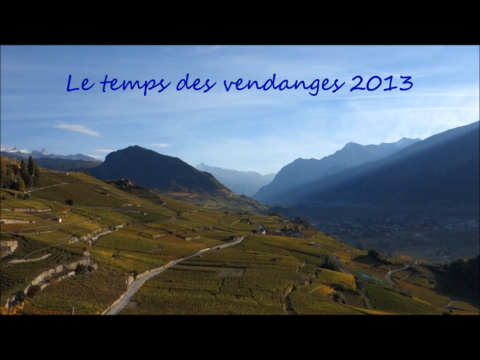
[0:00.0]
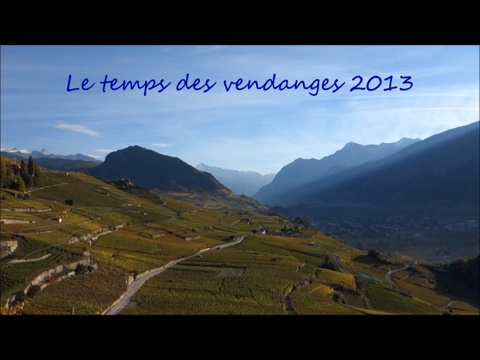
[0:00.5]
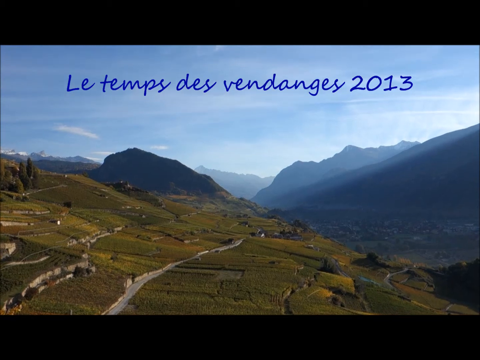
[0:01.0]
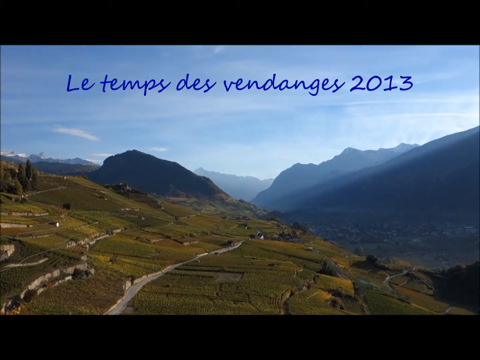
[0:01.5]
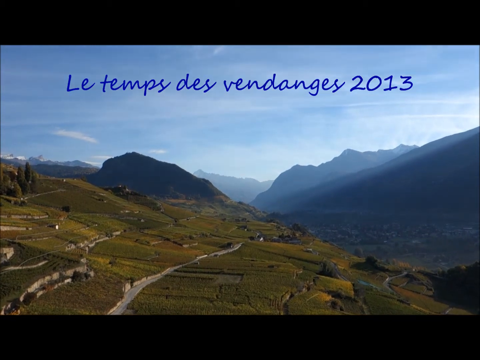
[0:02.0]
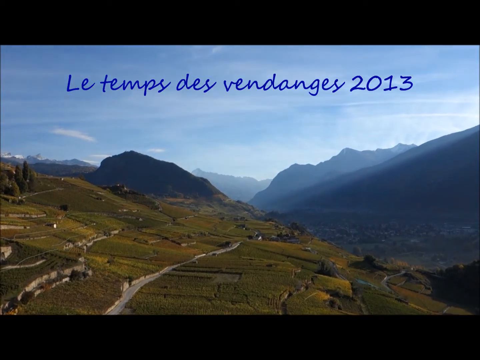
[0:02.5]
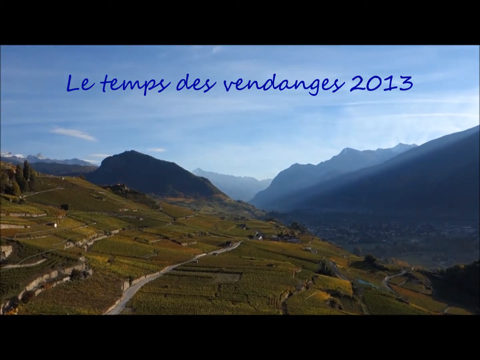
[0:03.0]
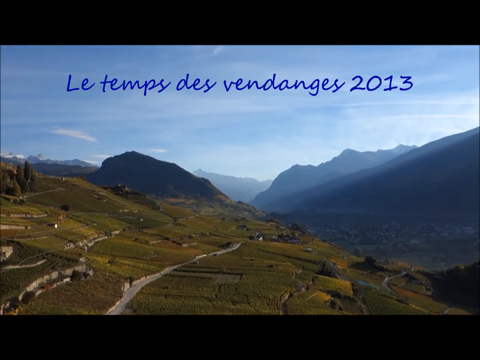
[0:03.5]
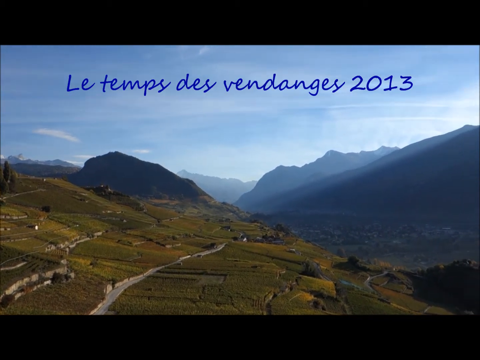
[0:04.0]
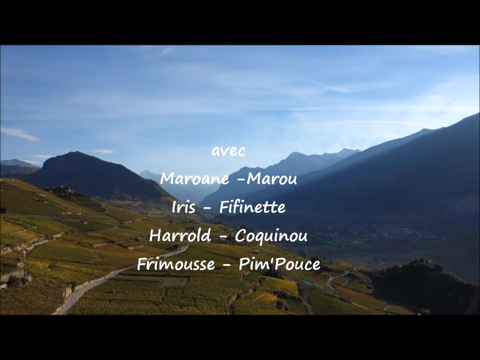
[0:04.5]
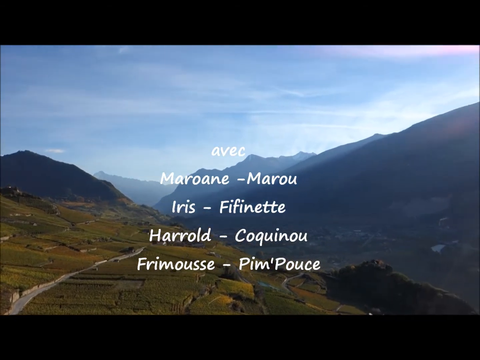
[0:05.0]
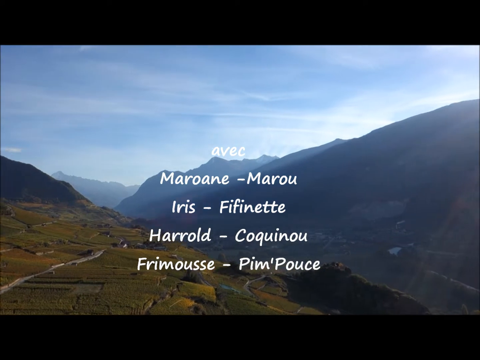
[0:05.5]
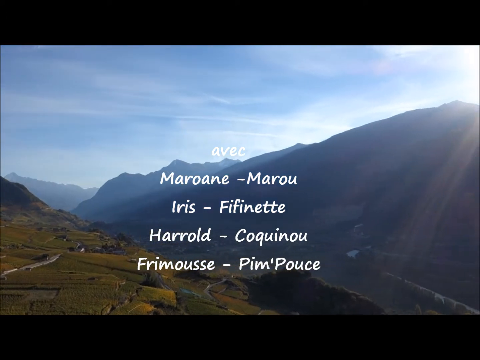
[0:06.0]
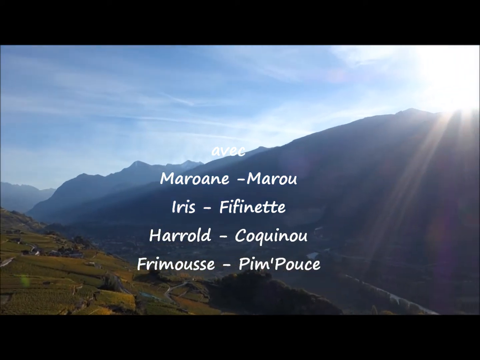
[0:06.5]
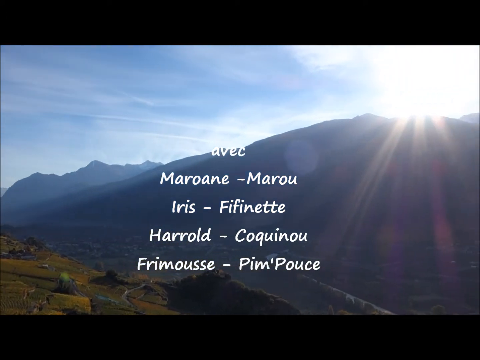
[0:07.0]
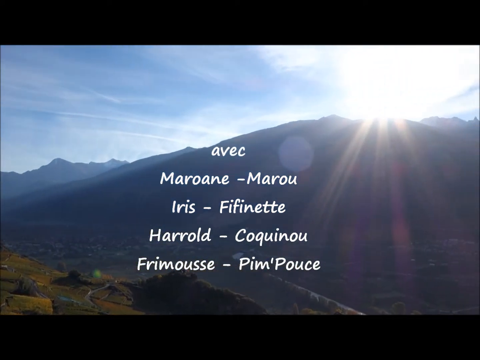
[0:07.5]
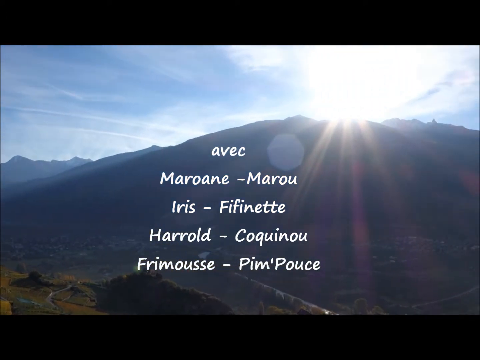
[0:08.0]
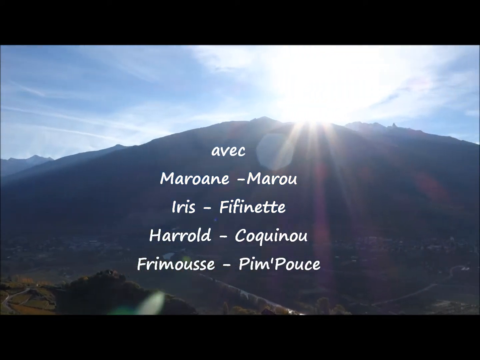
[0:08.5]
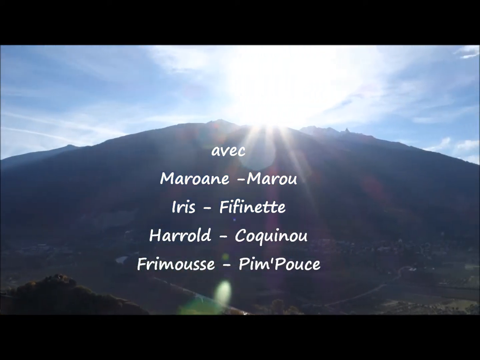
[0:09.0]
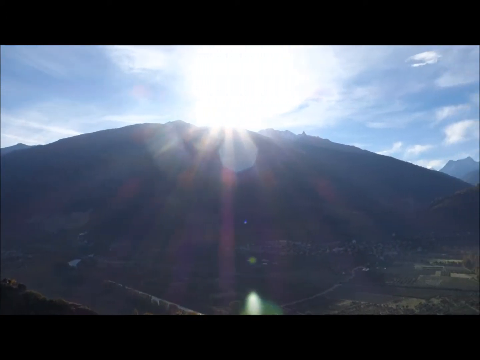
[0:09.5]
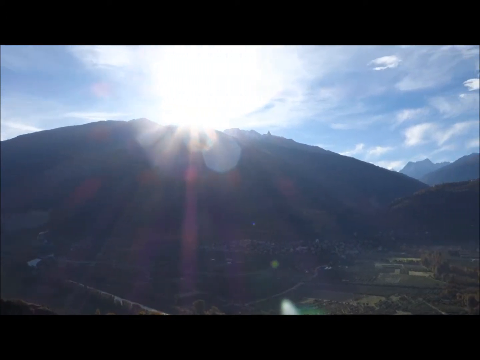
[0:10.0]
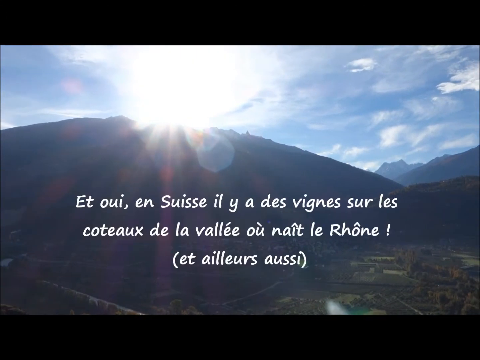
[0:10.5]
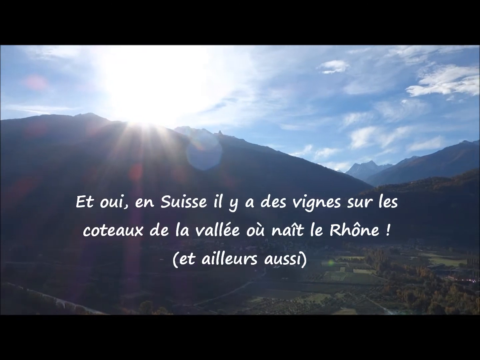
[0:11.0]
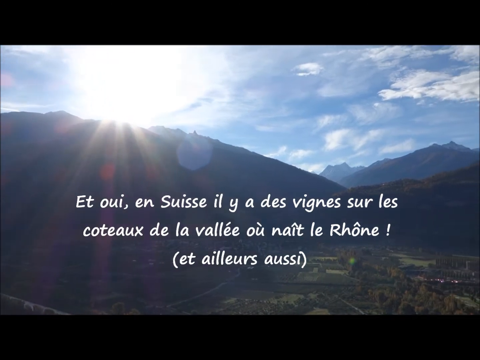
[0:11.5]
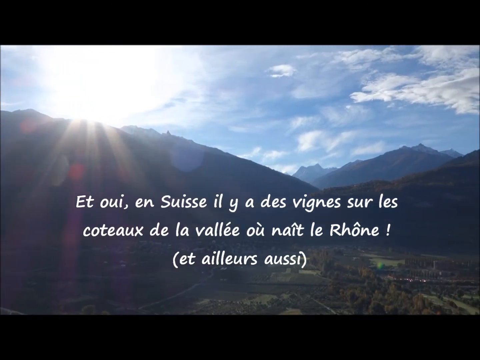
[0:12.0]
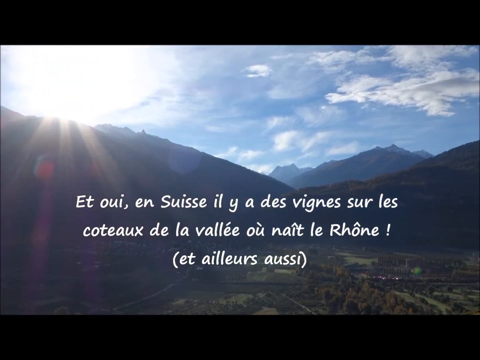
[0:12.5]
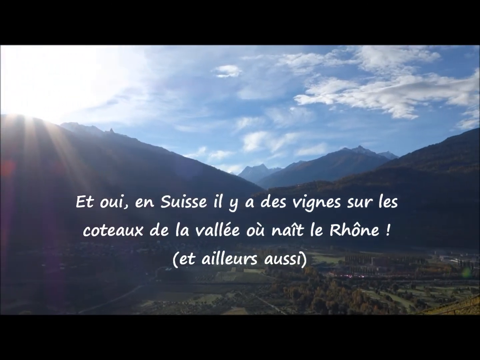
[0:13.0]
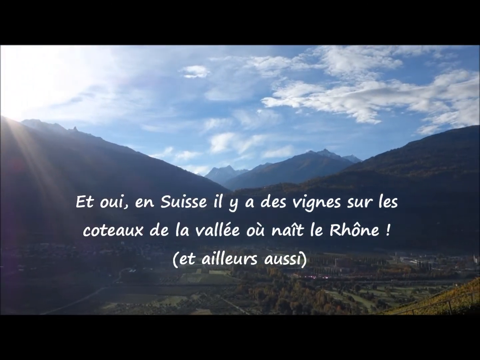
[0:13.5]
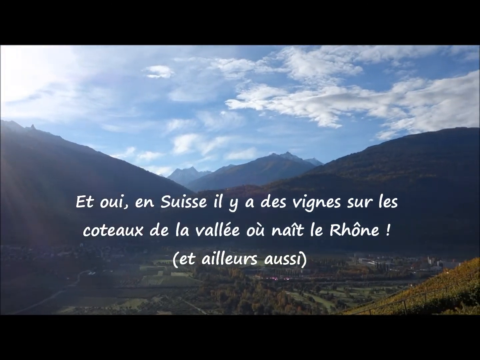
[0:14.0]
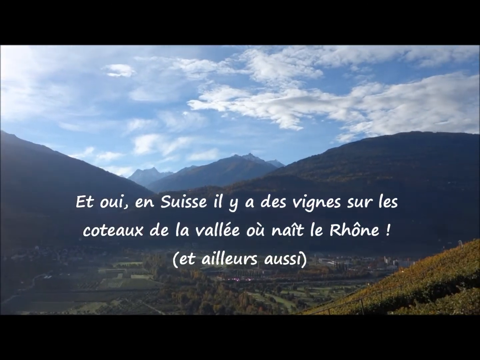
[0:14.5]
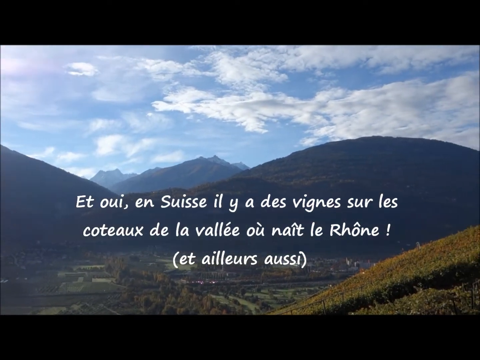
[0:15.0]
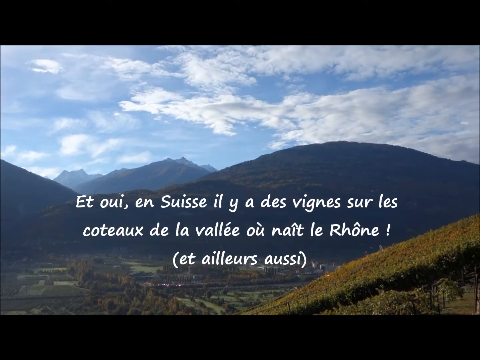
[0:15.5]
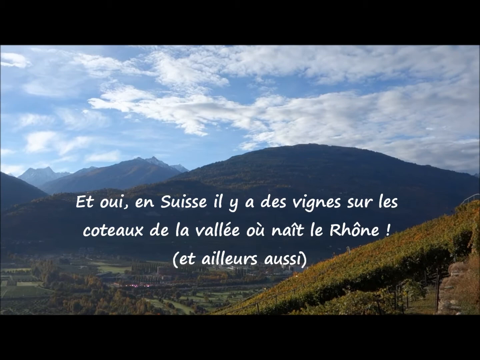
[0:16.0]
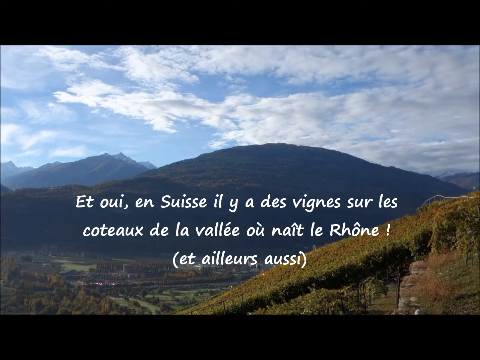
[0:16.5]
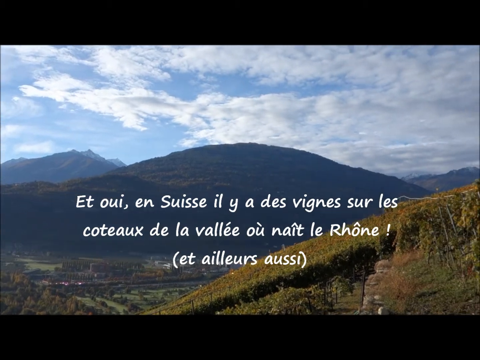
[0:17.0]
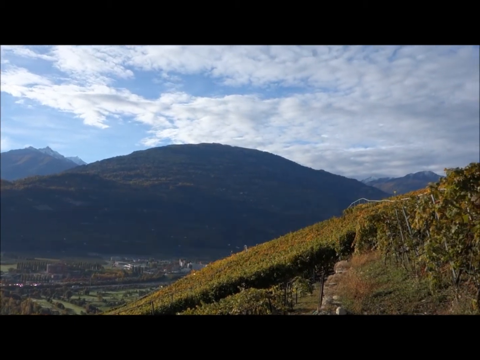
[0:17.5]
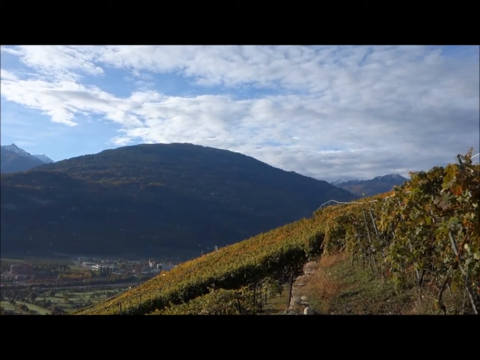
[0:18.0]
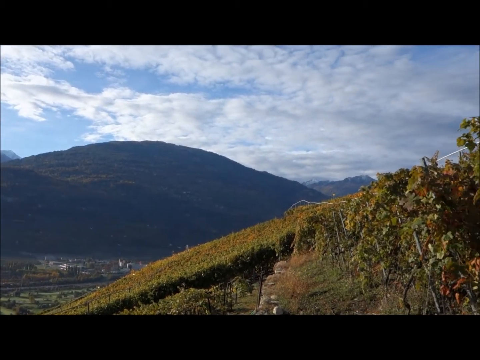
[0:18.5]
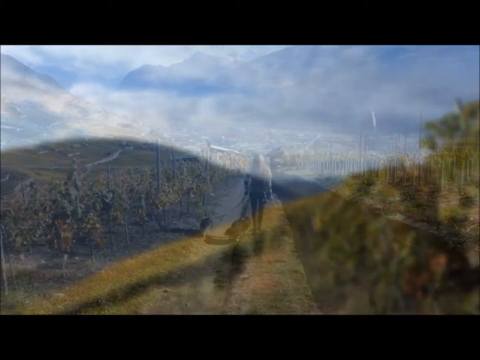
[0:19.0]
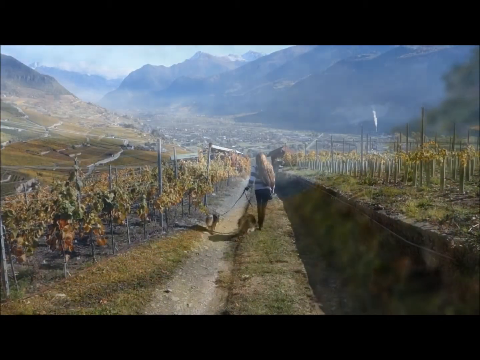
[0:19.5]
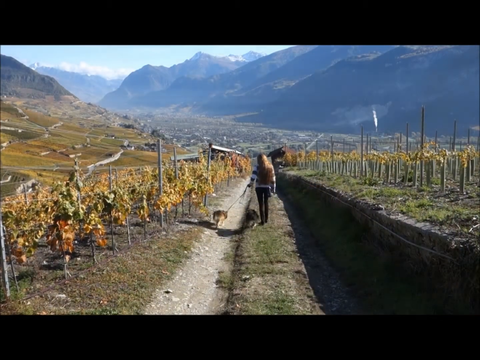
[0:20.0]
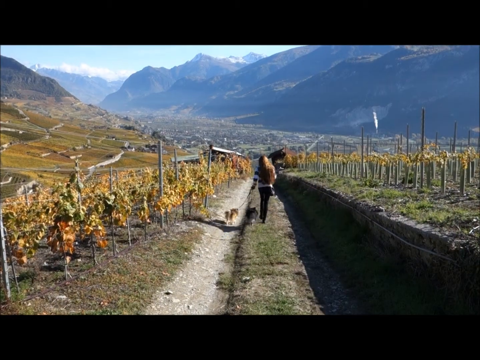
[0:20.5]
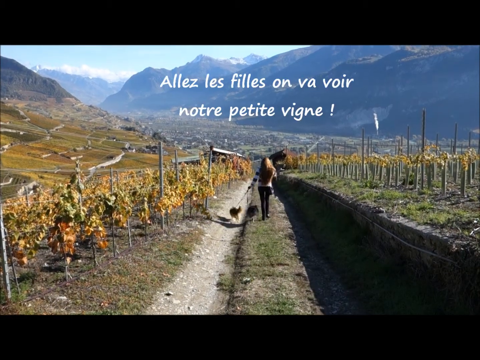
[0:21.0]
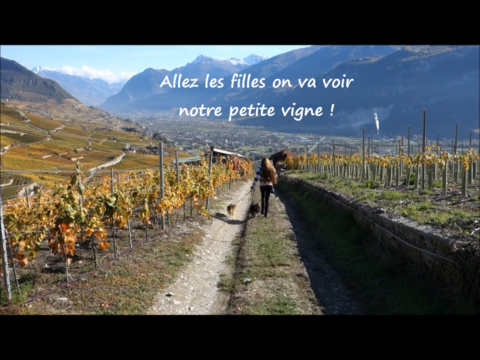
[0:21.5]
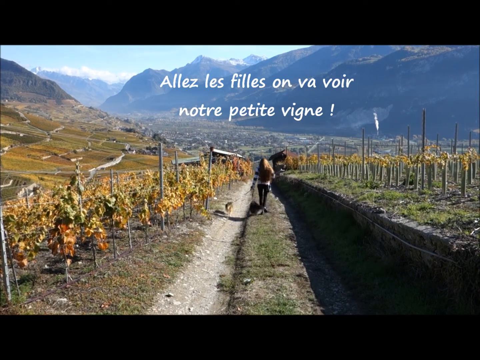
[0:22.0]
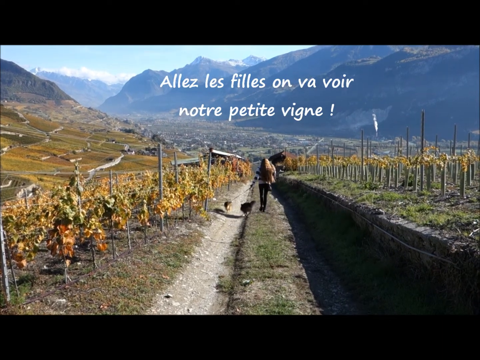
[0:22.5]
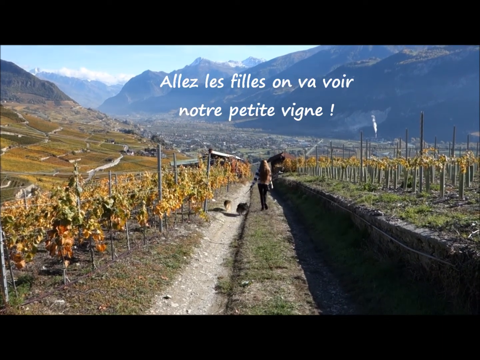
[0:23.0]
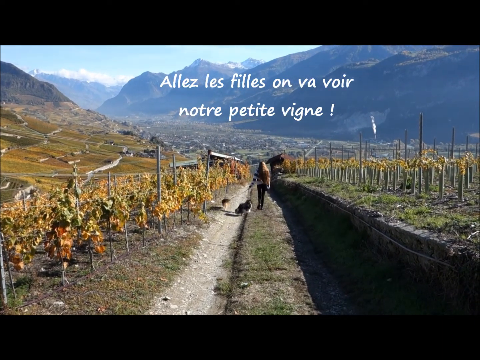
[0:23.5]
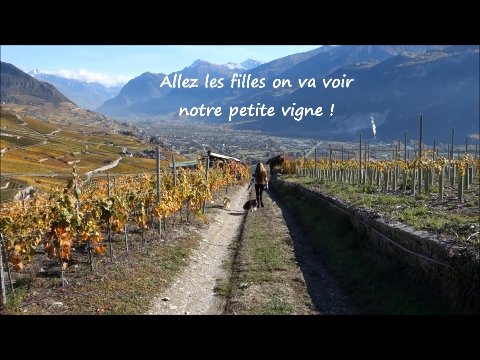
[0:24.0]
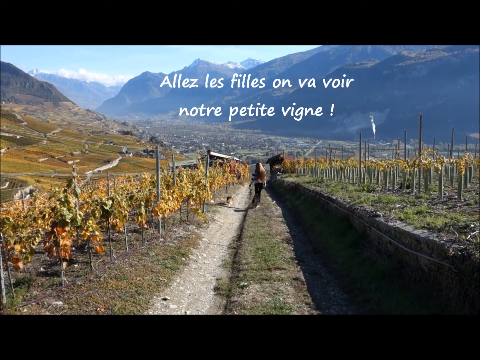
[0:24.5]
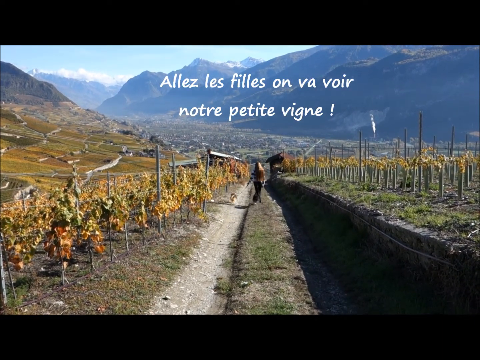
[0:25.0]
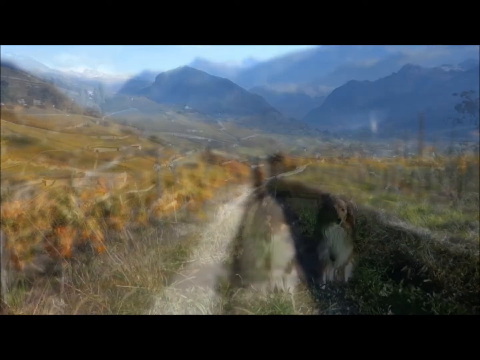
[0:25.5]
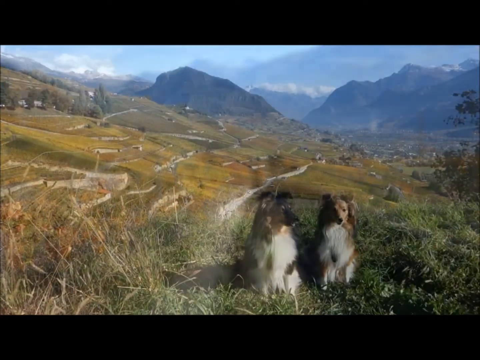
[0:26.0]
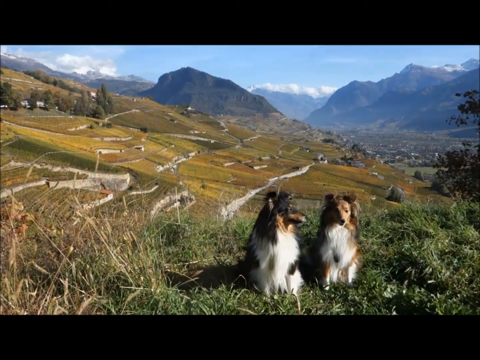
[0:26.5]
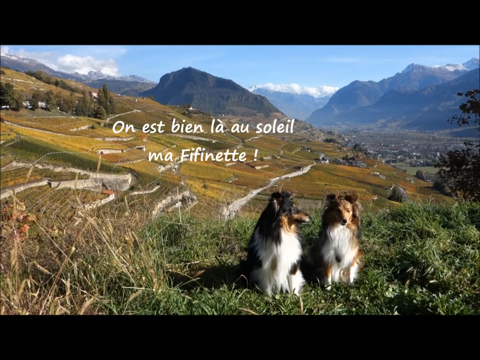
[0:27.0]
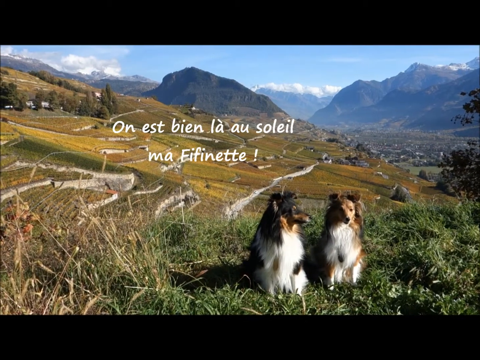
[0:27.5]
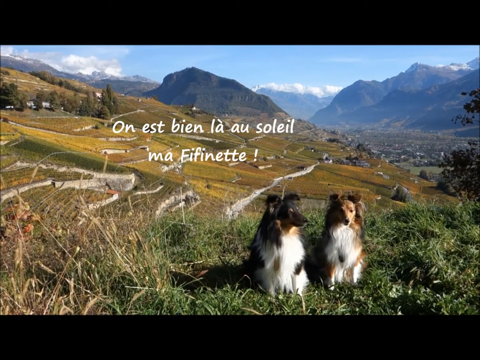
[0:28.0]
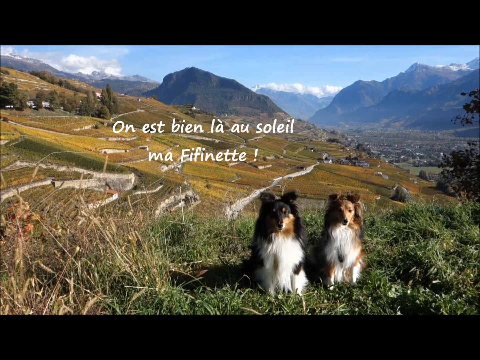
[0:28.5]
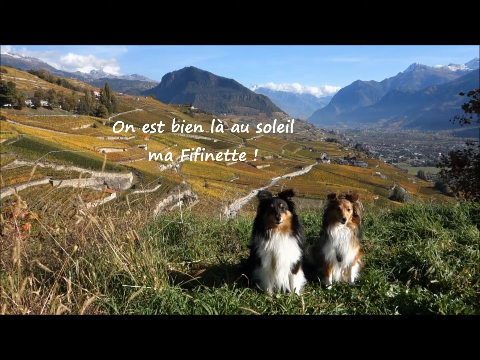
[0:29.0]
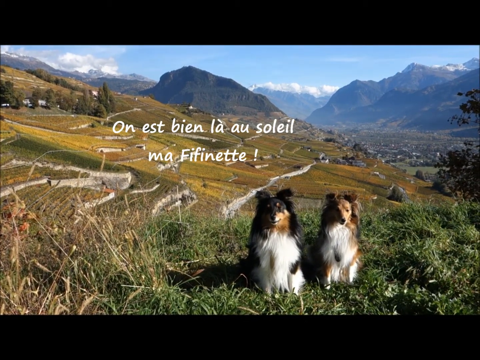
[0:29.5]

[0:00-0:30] A landscape shows a lot of blue sky with very few wispy clouds, outlines of mountains in the background, and green land in the foreground. The greenery has what almost looks like cracks or divisions, possibly paths. Tall, cone-like trees appear, along with words in another language, possibly French. The camera turns around in a full 360, revealing more mountains, the sun, and more French text. As it continues in a circle, more mountain ranges come into view, and down below in the field between the mountains there are roads, buildings and what may be people. The video then shows a person walking a small to mid-sized dog on a leash through what looks to be a vineyard or winery, with hills all around her and rows of grapes on either side. Two dogs then sit next to each other.